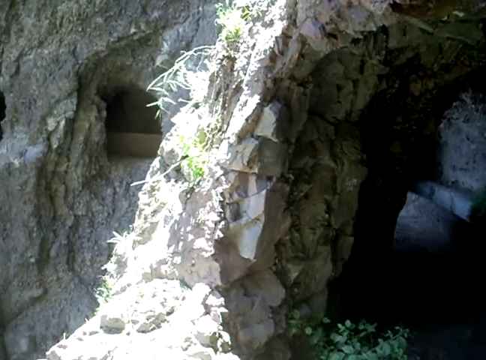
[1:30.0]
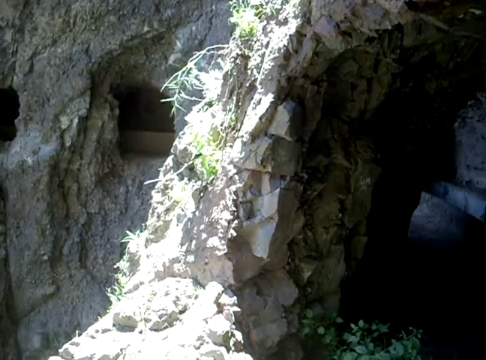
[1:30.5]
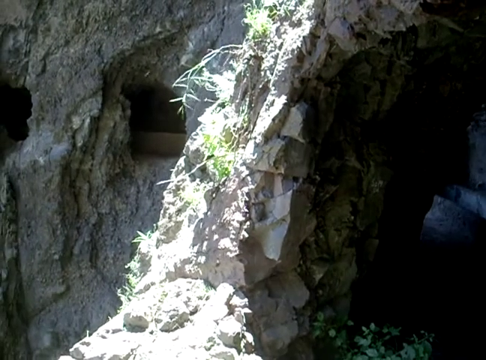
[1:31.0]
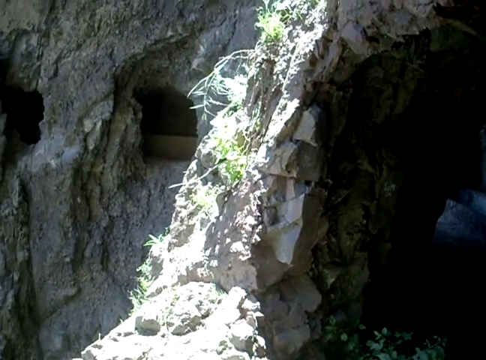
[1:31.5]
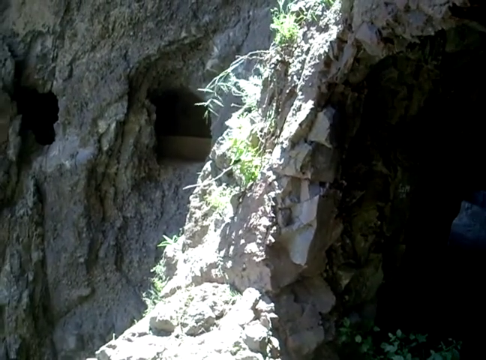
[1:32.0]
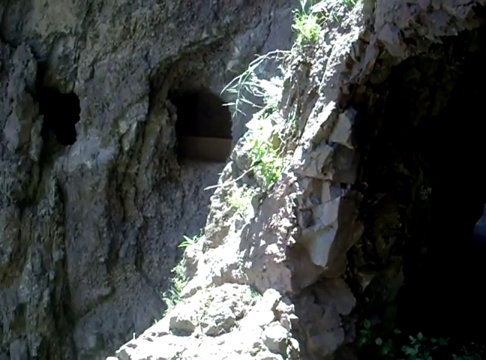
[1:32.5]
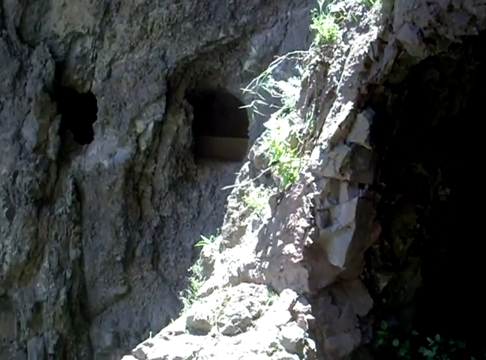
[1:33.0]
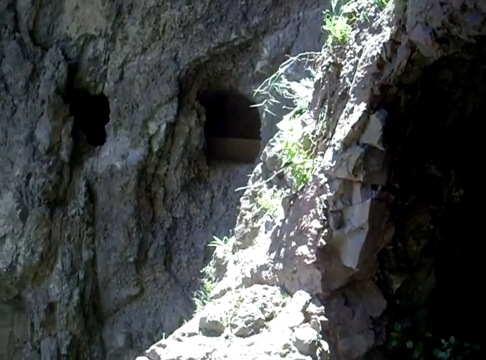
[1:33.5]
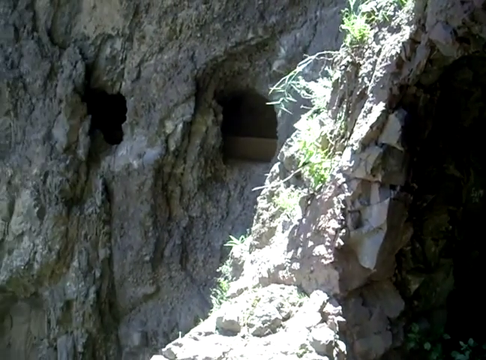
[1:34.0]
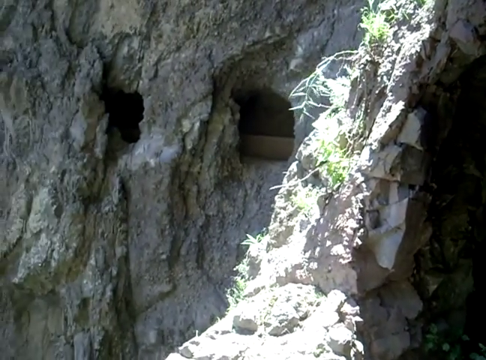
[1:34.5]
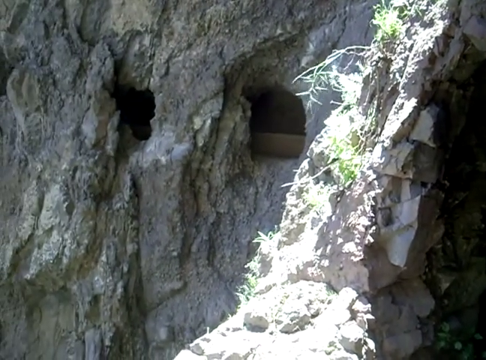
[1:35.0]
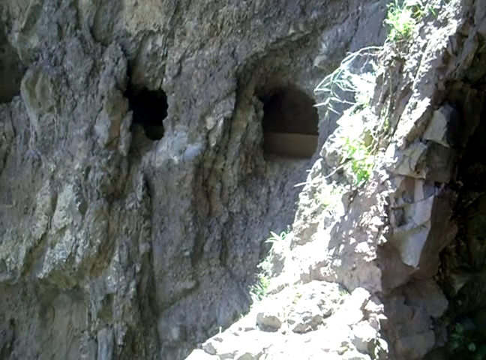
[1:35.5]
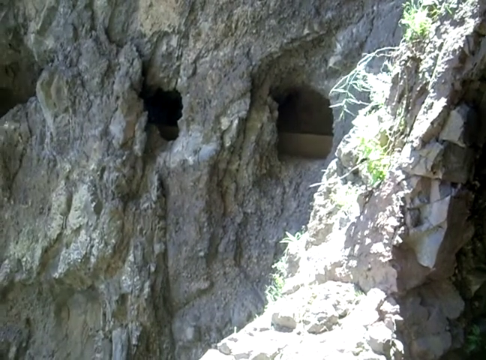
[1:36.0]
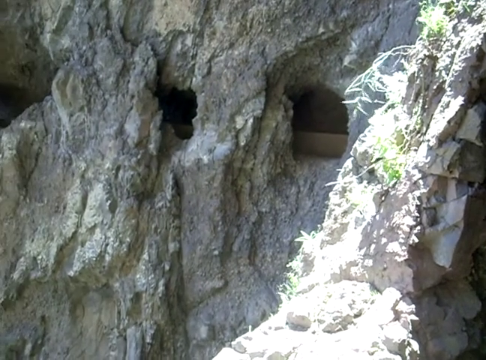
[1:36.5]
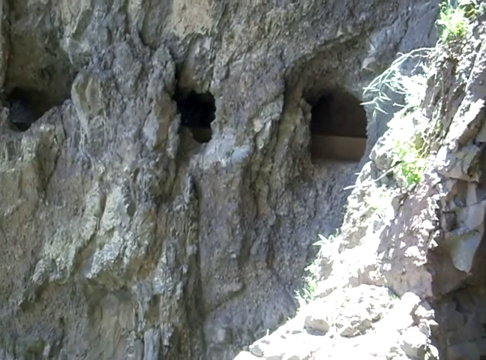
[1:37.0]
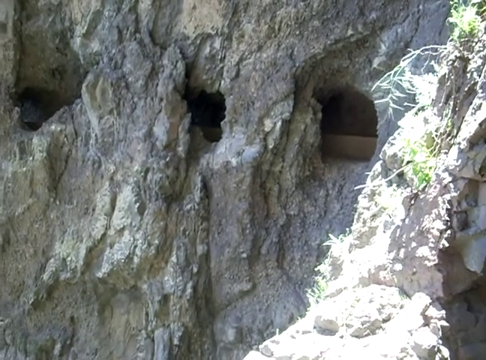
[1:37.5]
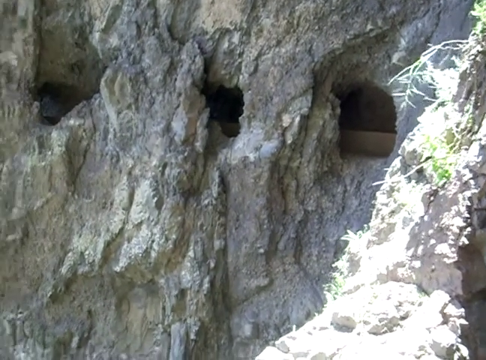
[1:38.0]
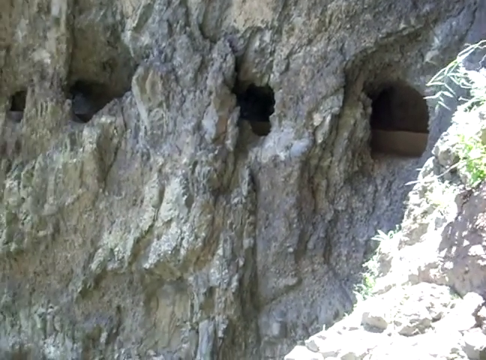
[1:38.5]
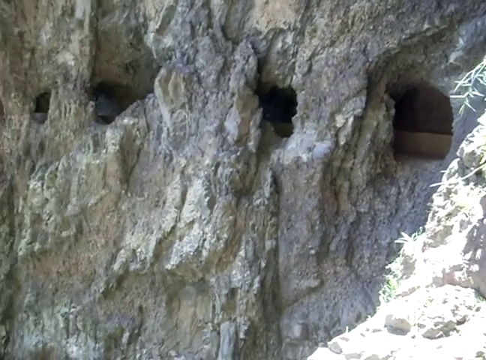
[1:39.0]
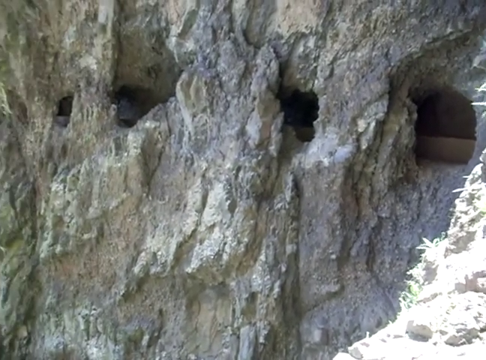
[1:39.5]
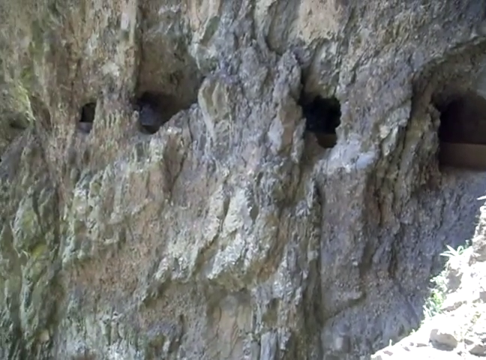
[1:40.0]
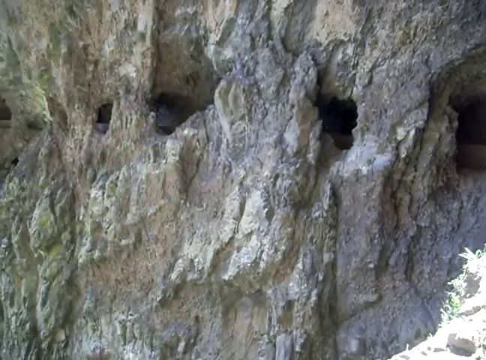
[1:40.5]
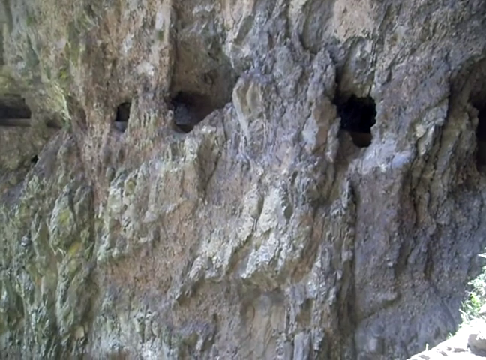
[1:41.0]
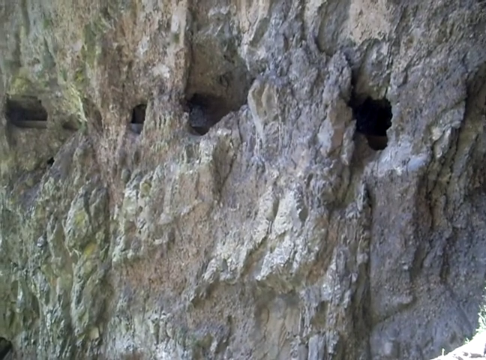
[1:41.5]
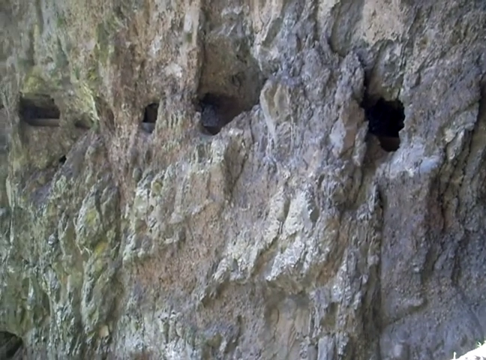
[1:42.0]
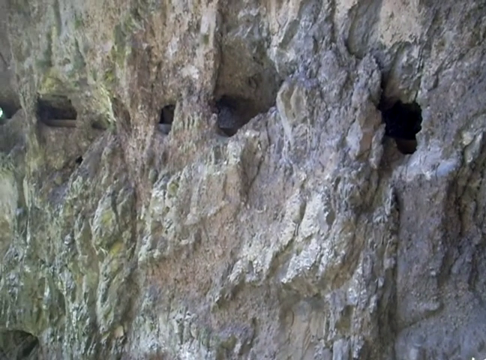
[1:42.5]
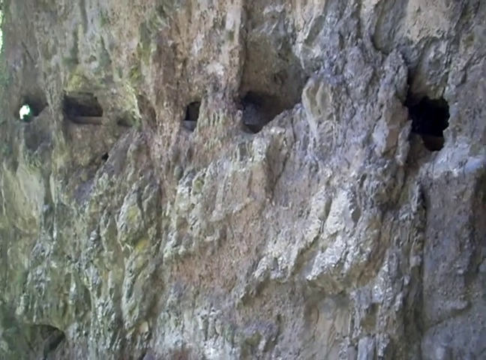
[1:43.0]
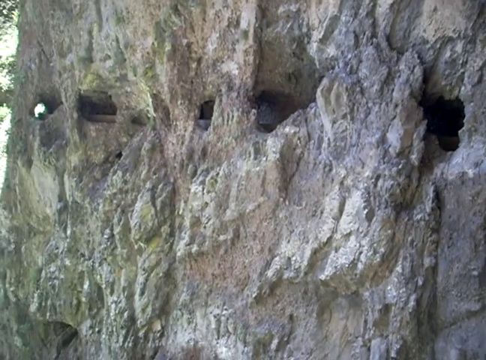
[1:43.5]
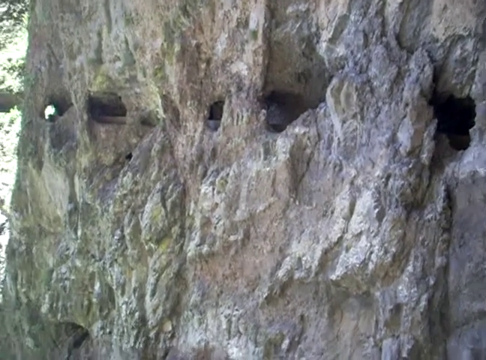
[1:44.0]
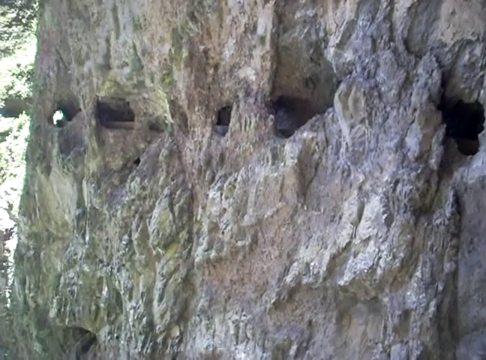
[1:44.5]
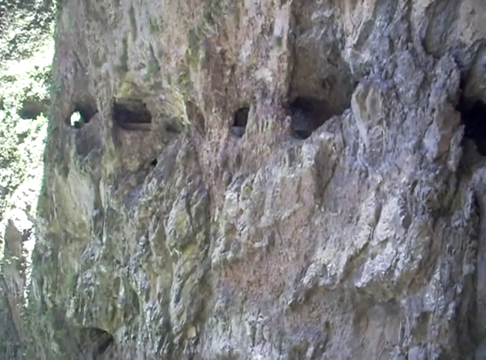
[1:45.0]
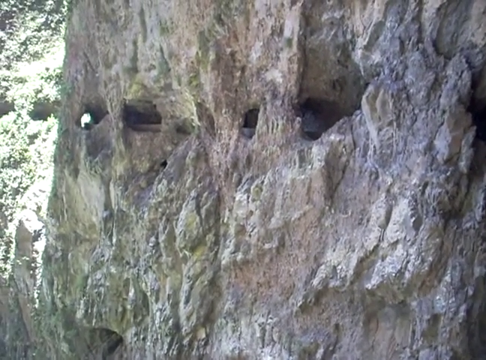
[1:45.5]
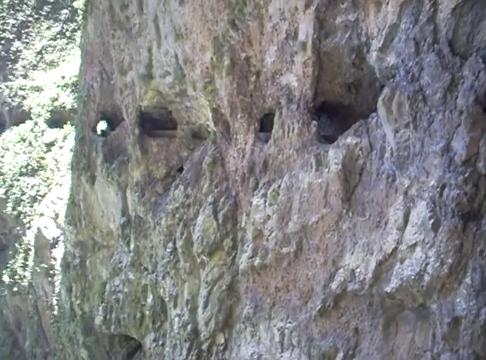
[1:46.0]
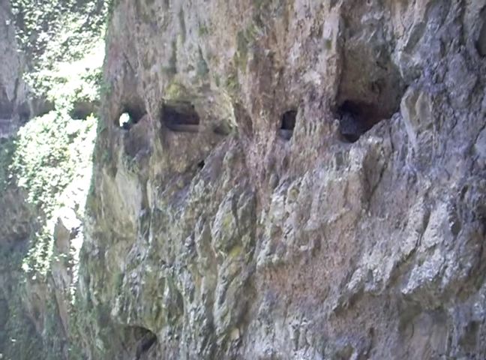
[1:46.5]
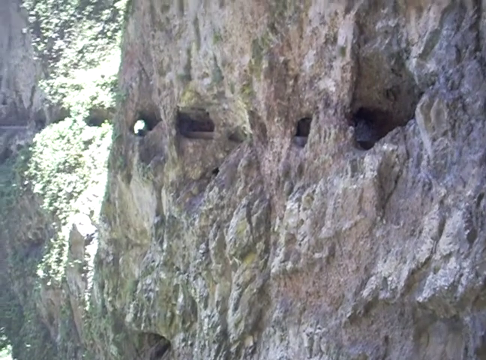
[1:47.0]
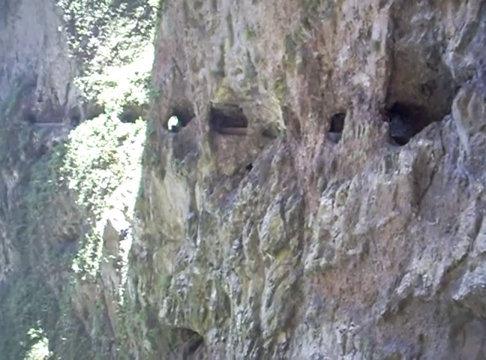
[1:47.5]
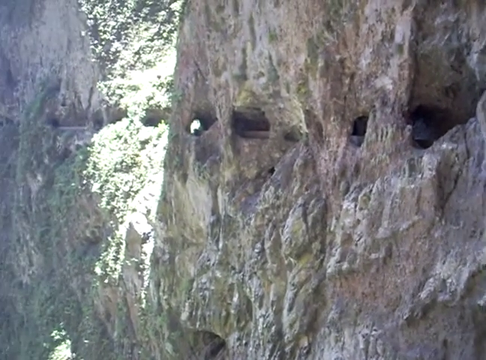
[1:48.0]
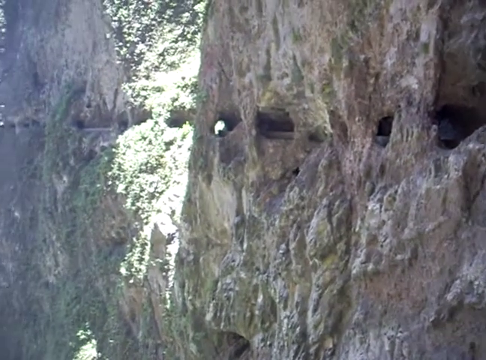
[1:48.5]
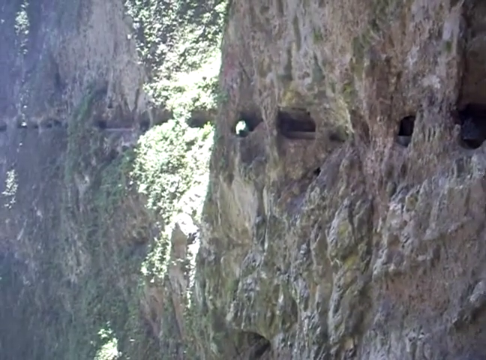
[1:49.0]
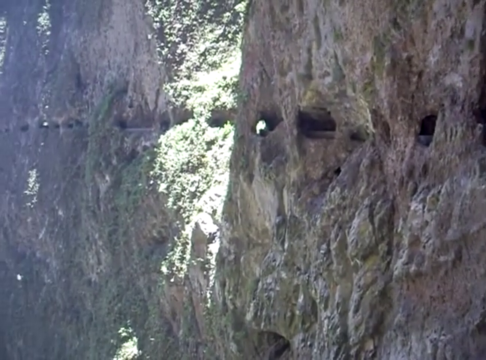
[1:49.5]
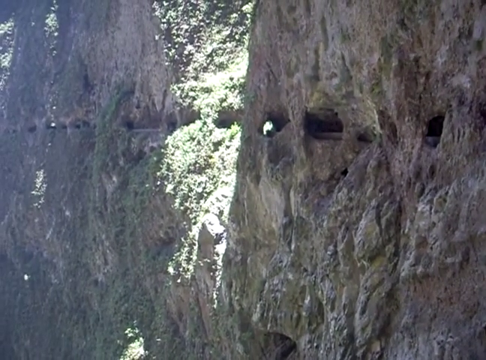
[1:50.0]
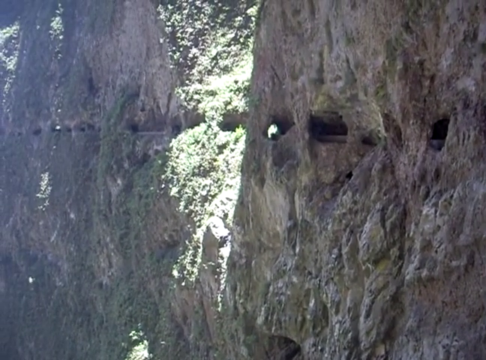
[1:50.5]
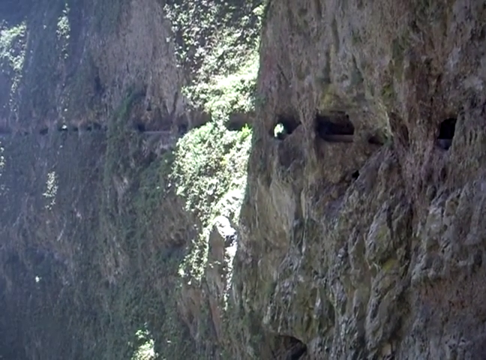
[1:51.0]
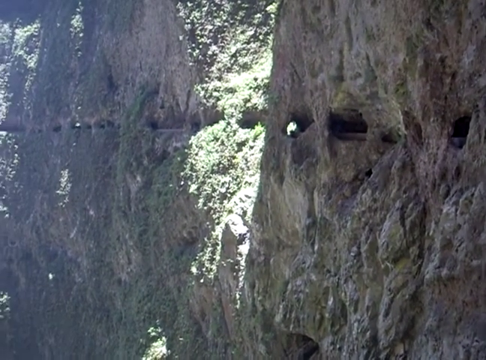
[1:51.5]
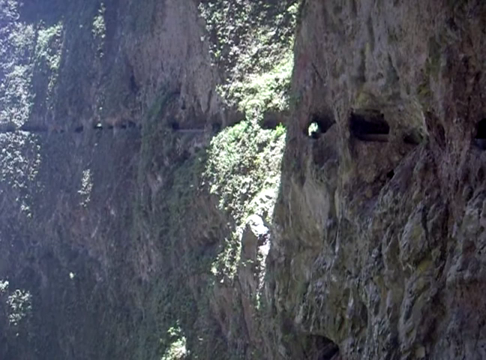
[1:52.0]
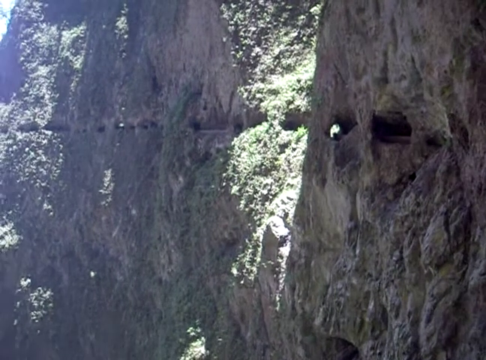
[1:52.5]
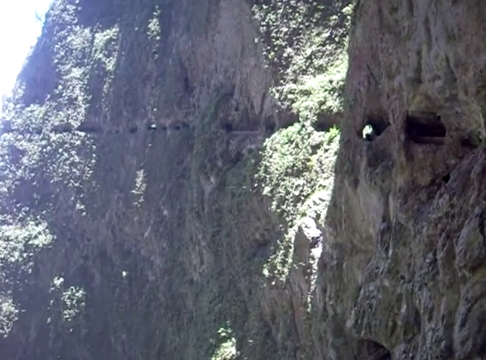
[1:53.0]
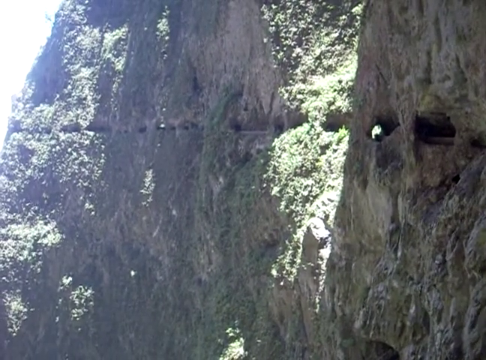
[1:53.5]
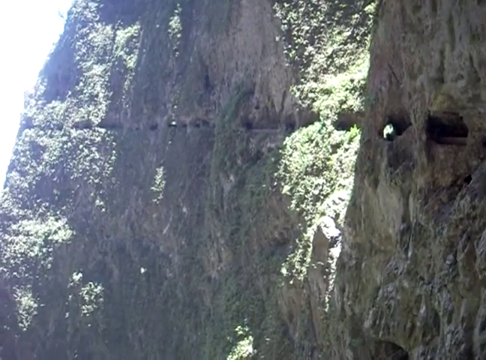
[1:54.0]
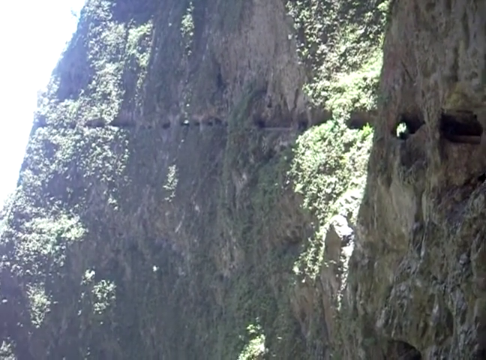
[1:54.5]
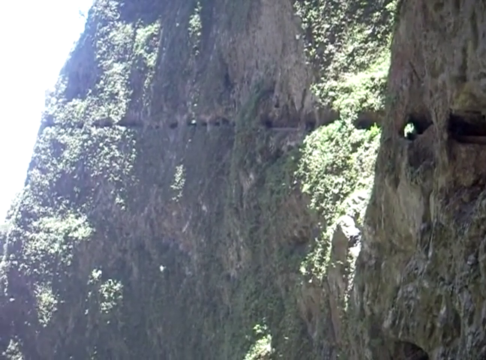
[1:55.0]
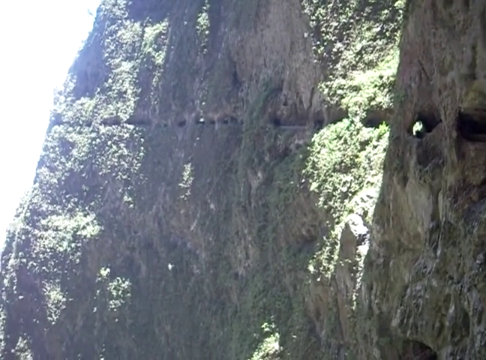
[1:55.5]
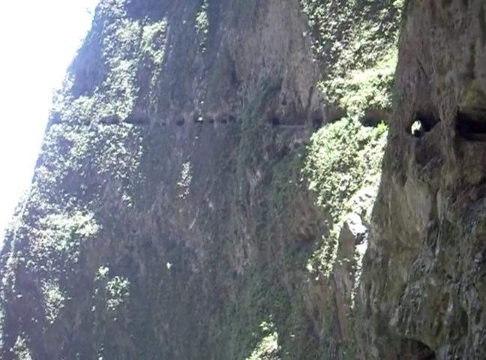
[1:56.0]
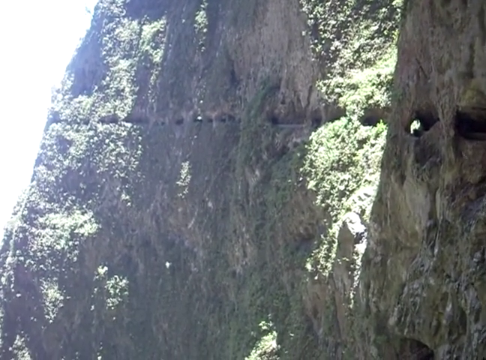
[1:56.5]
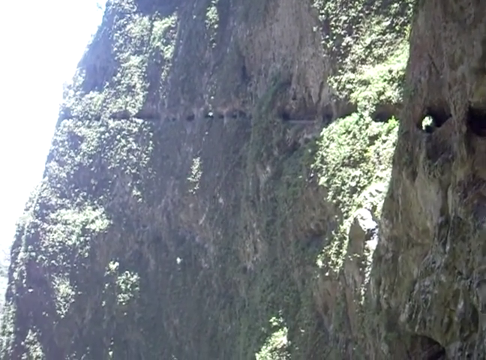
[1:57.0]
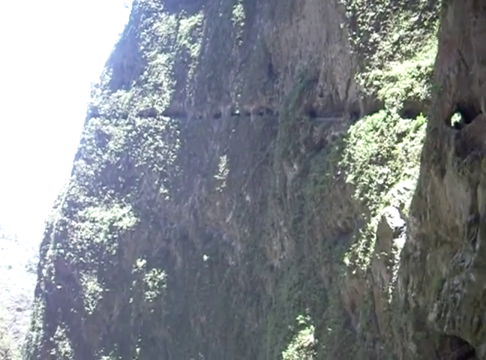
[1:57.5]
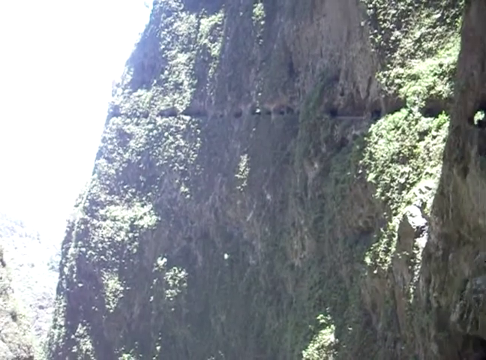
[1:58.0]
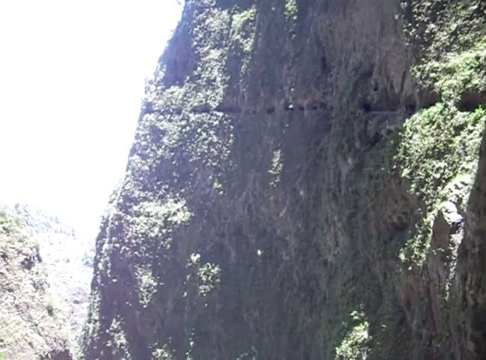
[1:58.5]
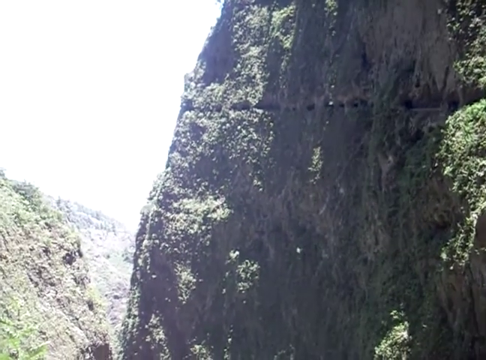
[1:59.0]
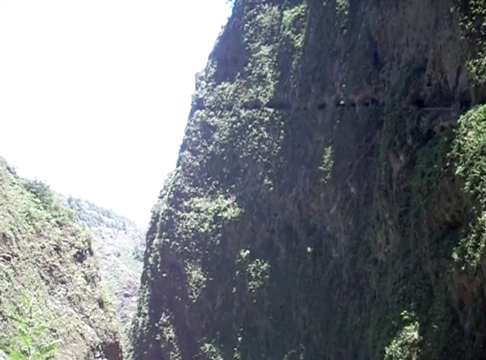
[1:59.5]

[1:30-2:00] The view shows the outside of where the holes and the pathway are. There are numerous holes in this side of the mountain along the pathway, almost like handmade windows carved into the stone. A man-made railing or structure is visible along the way, apparently either to keep people from falling or to keep the wall from caving in; the structure appears to go around the whole of that side of the mountain, and the image follows it to the edge where that side of the mountain ends. A close-up shows details of the mountain: lighter stone colors, some darker patches, and some moss growing on the side of the mountain. Light is visible at the end of the side on the left-hand side. The camera pans from right to left. The windows are different sizes but are placed at the same height.